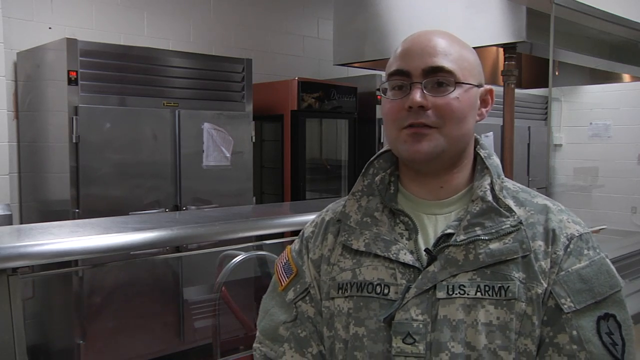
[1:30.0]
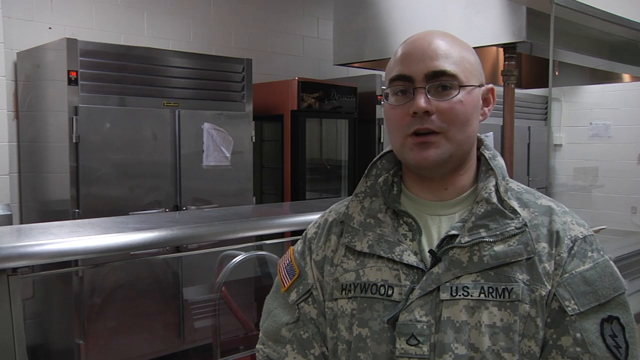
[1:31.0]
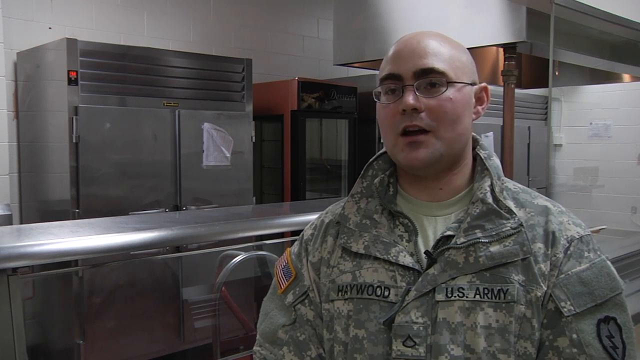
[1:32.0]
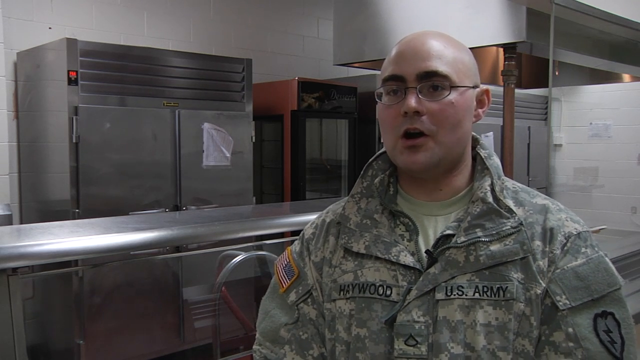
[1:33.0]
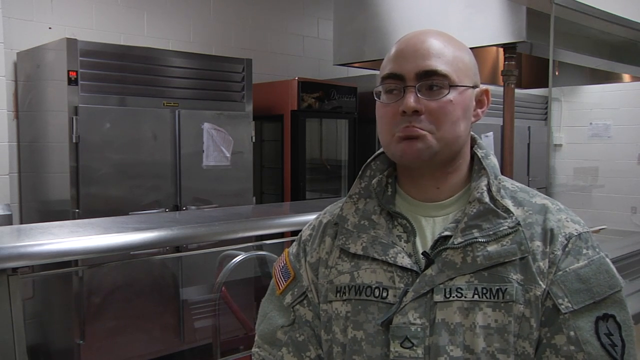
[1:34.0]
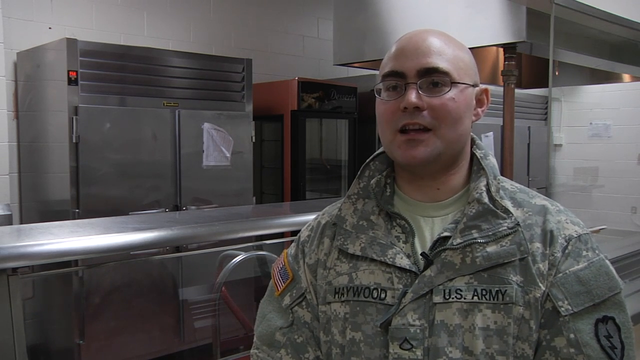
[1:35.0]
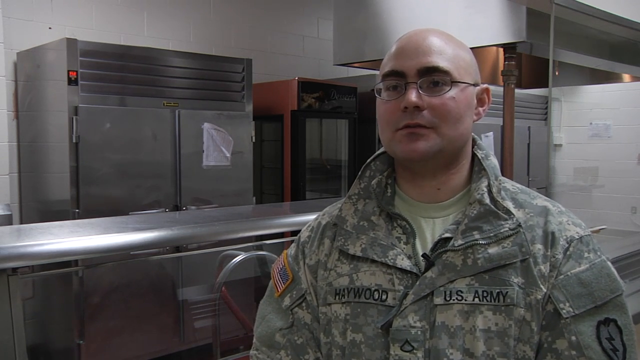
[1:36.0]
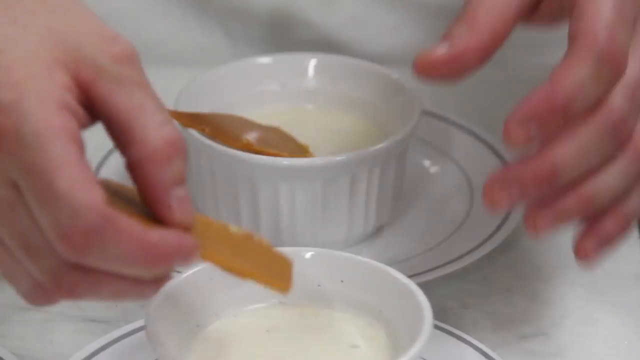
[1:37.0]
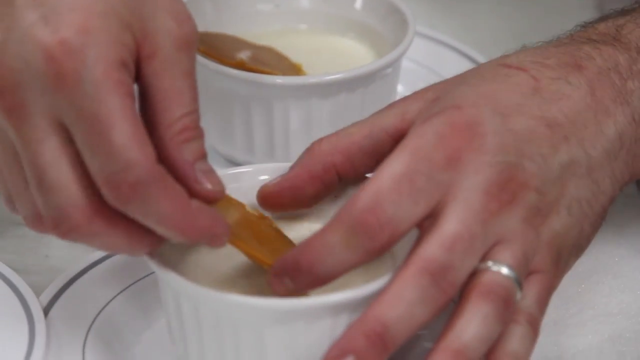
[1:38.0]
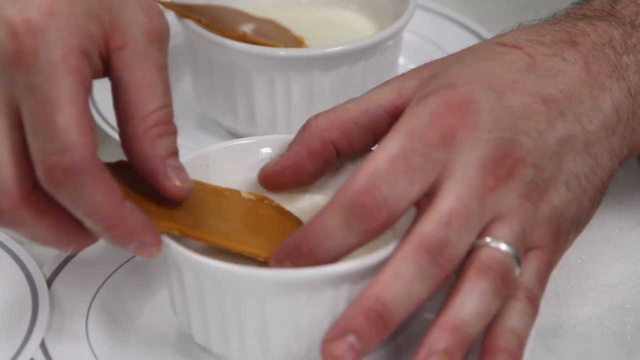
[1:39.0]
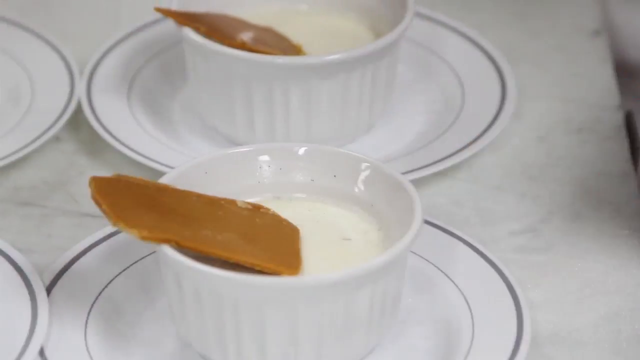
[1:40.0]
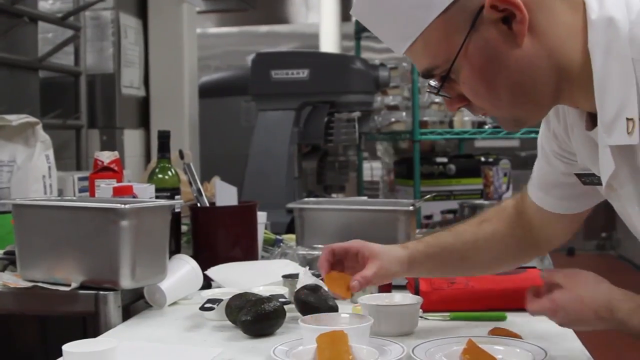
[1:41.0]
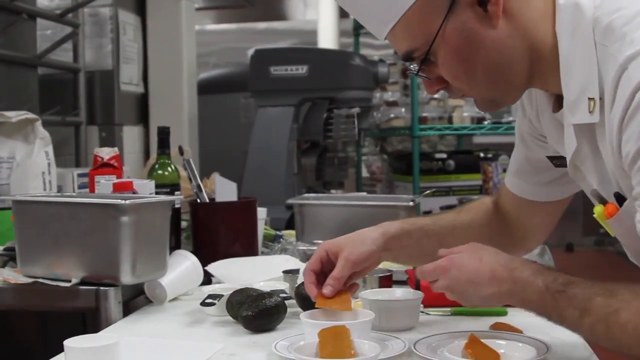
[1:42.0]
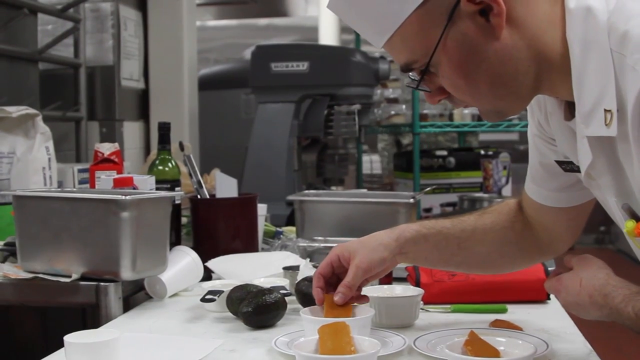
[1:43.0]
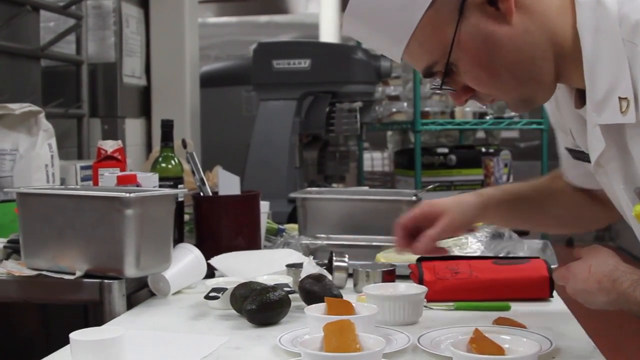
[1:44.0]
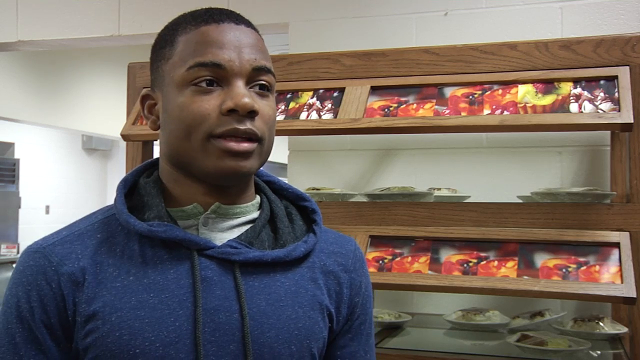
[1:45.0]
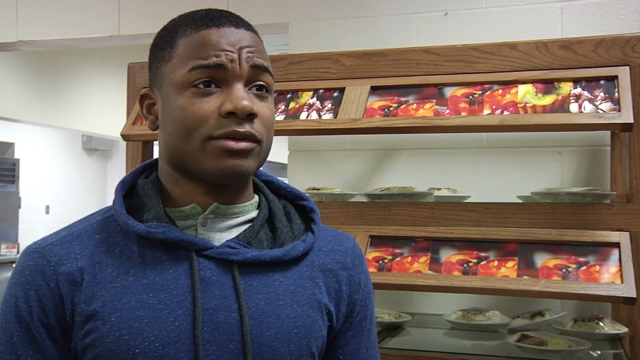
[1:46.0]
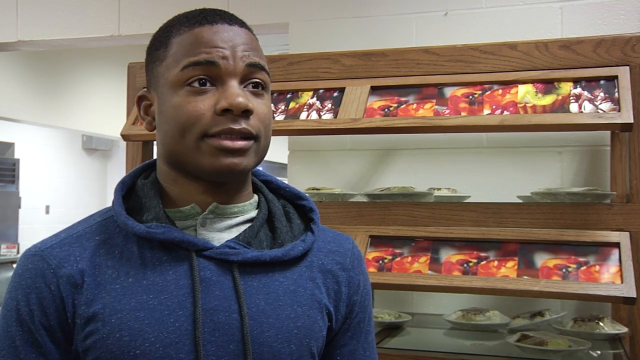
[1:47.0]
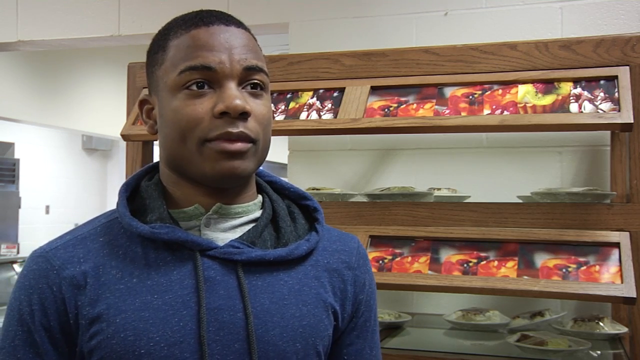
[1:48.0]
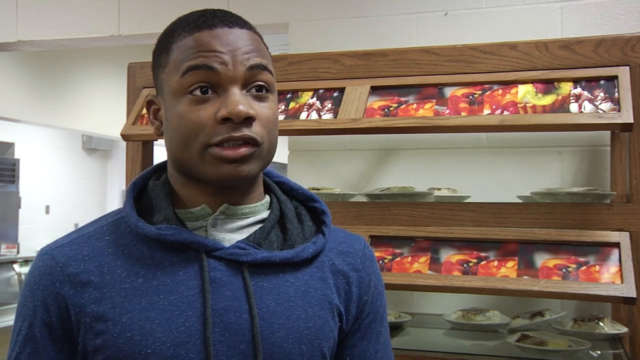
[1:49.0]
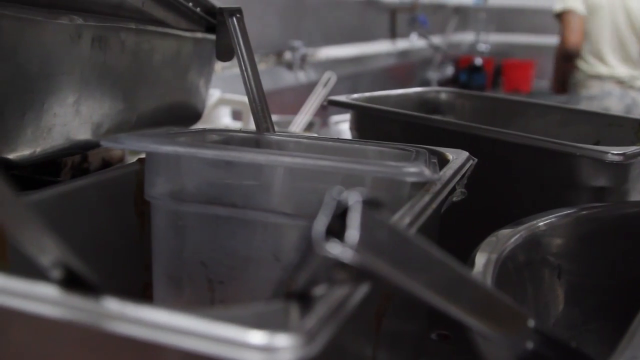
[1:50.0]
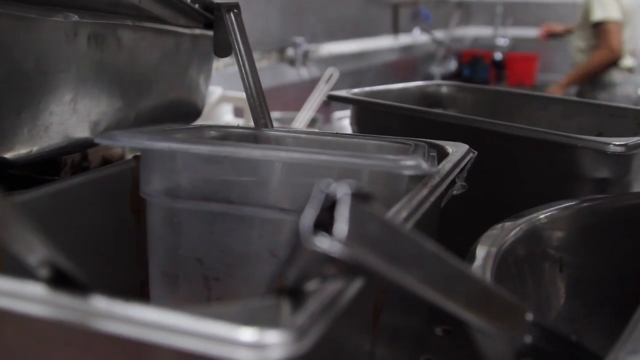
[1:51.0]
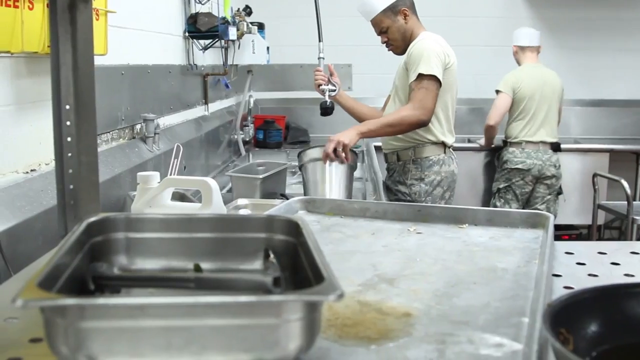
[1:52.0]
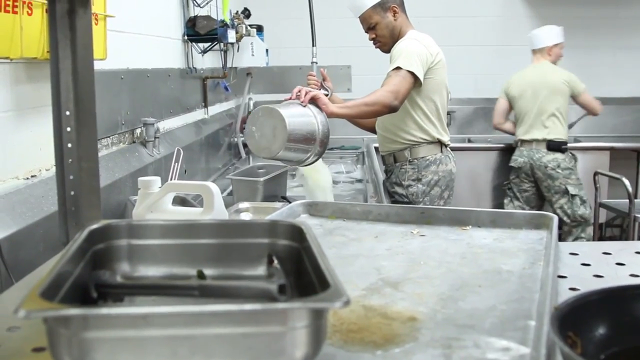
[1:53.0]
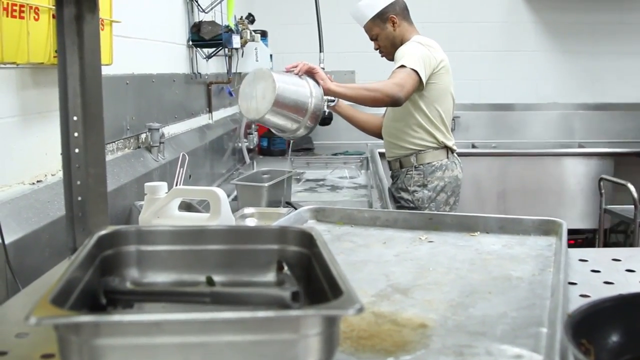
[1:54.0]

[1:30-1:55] Hayward is still talking, nodding as he speaks. Next, somebody carefully places what looks like a piece of toffee, possibly some kind of toffee, in a white ramekin; there seem to be several of these ramekins, and he takes care with what he does. The man in the blue hoodie is shown again, still talking off camera; he is quite expressive, his forehead moving a lot as he speaks. Back in the kitchen, the cleanup is under way. One man uses a hose that seems to be mounted high up on the wall to spray into a silver bucket, which he then tips into a sink full of water. Everything in the kitchen is very shiny metal. There appears to be a stack of washing up in the foreground, and in the background a man also seems to be standing near a sink doing something before he walks away.